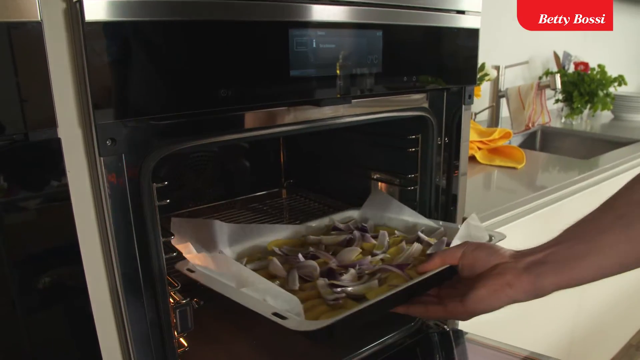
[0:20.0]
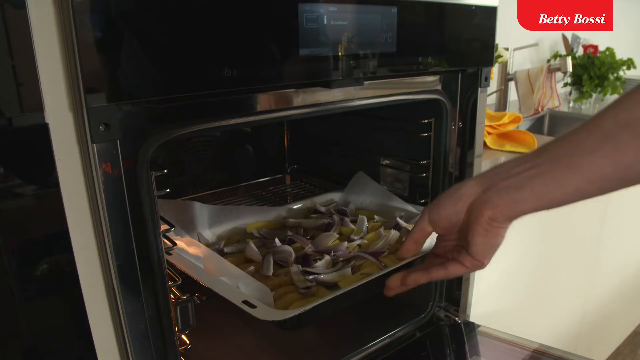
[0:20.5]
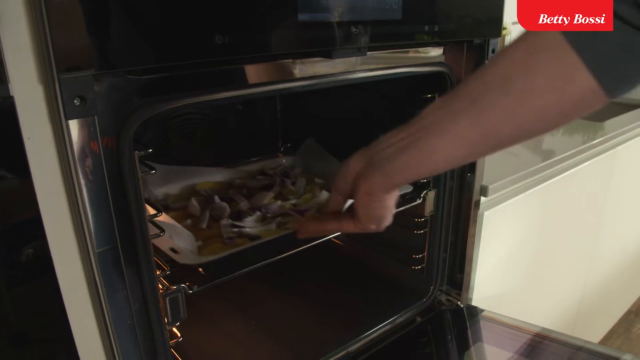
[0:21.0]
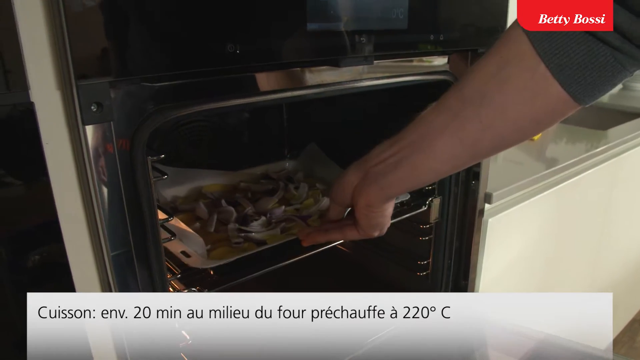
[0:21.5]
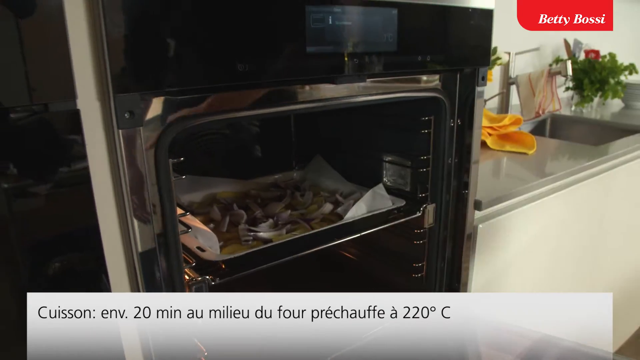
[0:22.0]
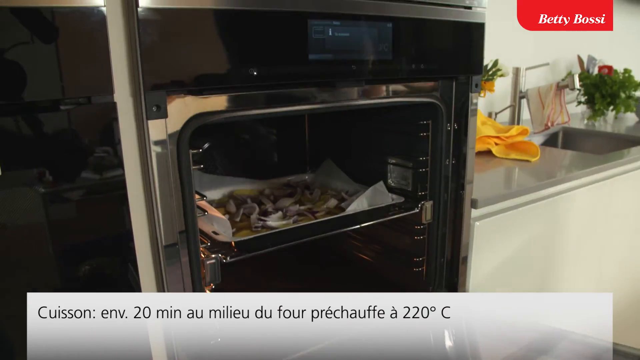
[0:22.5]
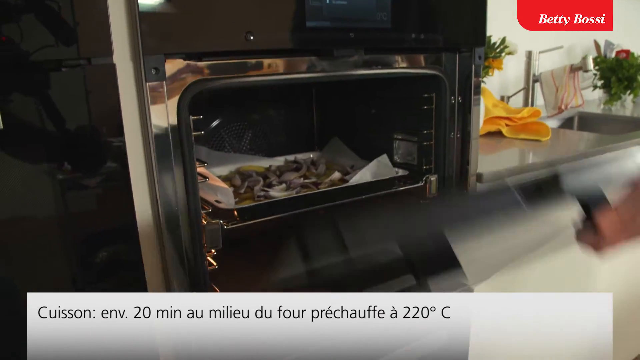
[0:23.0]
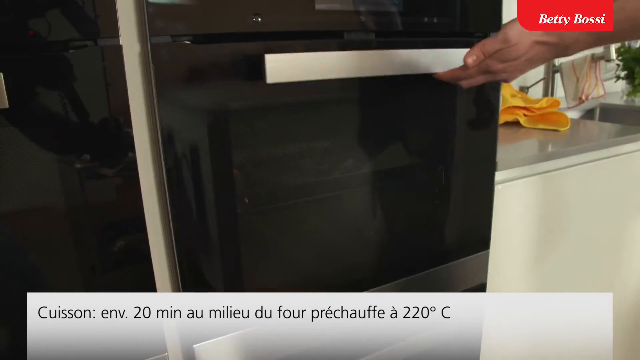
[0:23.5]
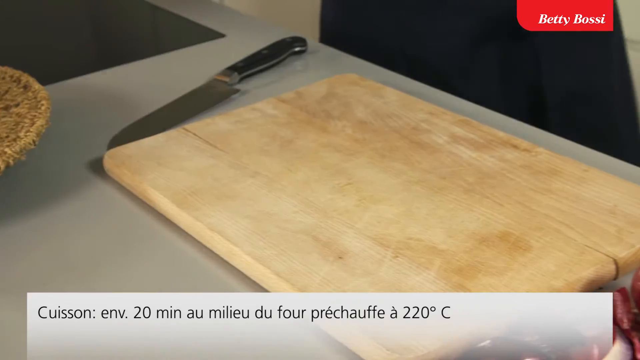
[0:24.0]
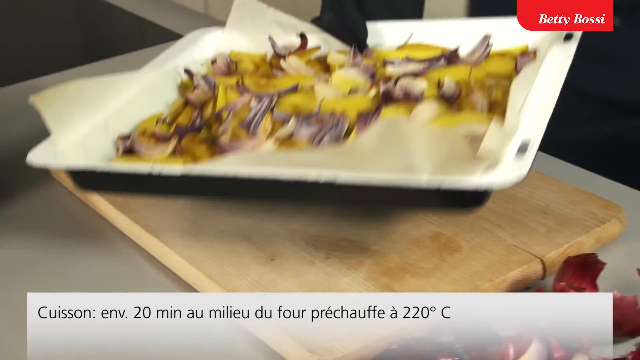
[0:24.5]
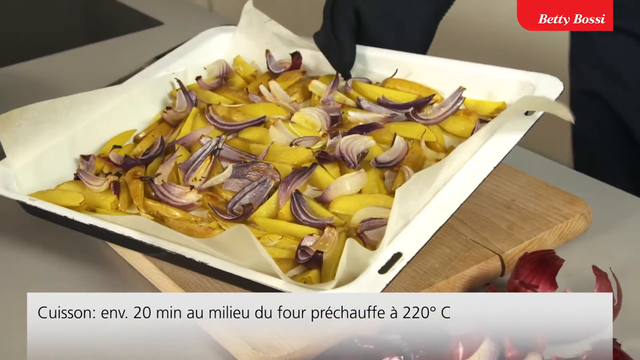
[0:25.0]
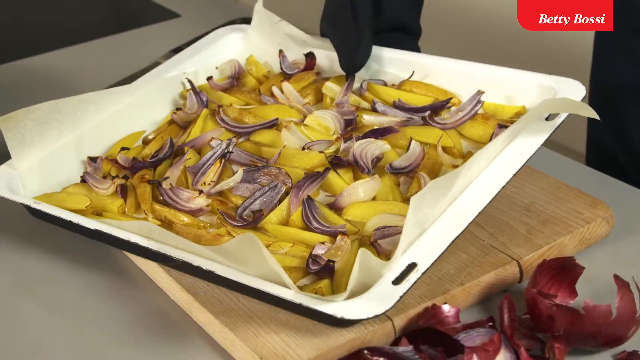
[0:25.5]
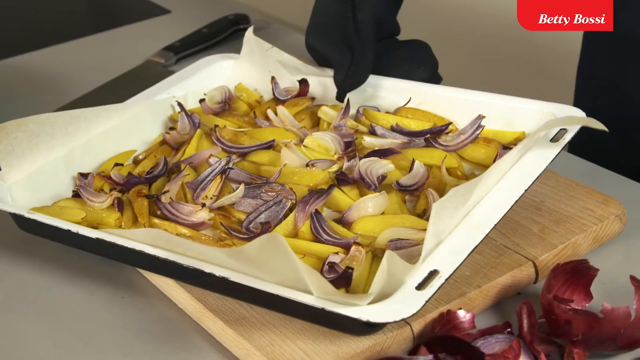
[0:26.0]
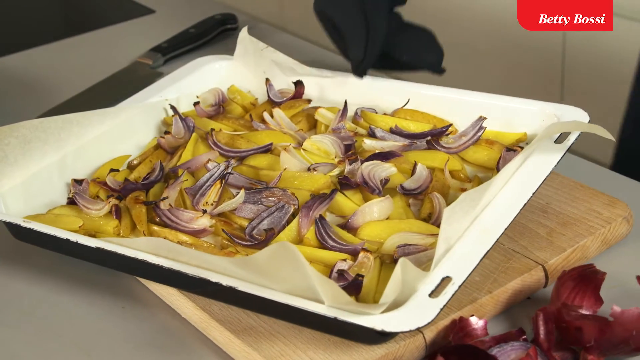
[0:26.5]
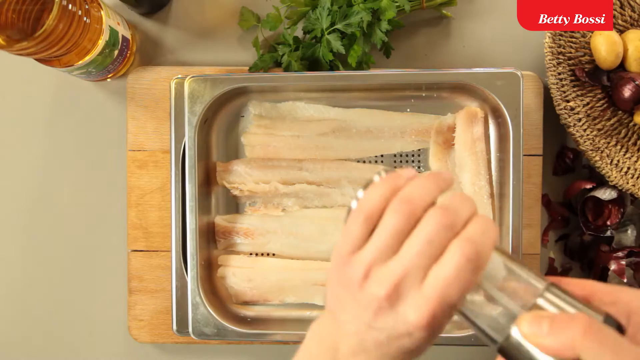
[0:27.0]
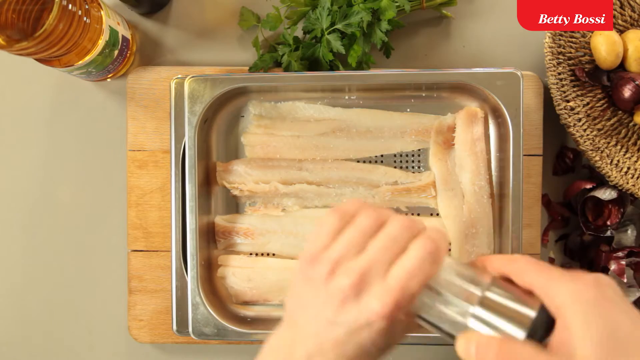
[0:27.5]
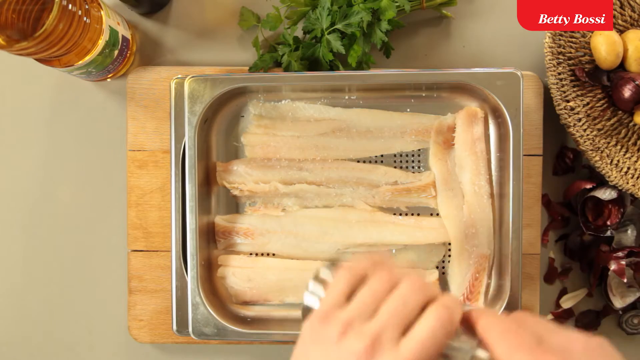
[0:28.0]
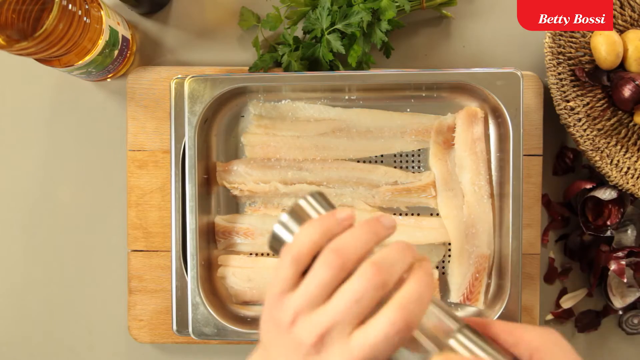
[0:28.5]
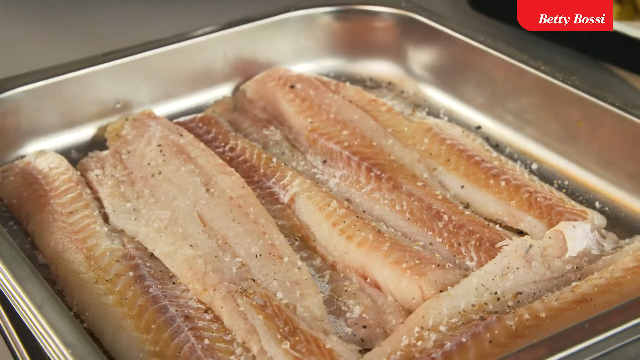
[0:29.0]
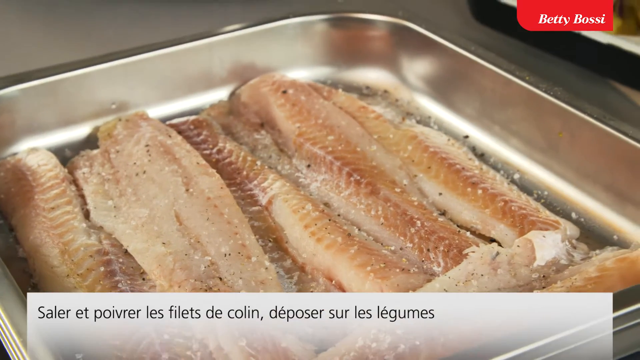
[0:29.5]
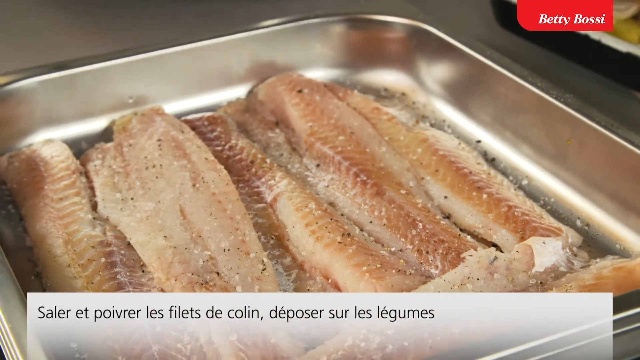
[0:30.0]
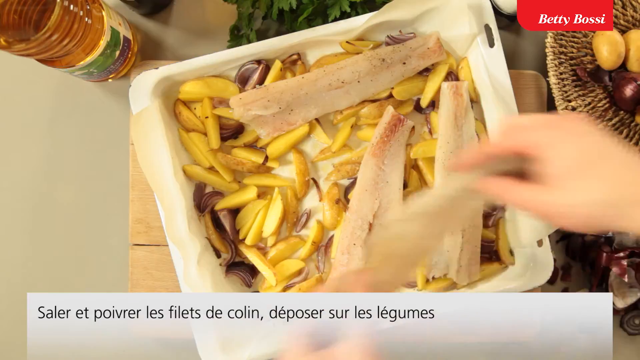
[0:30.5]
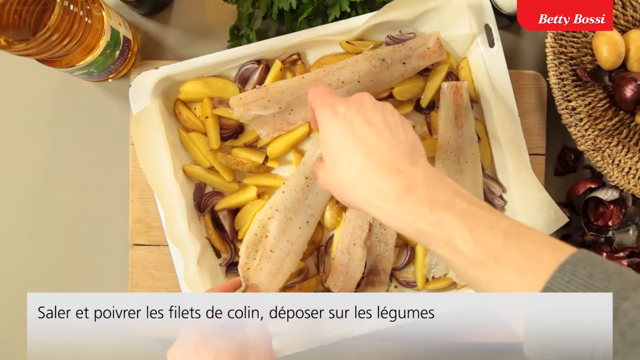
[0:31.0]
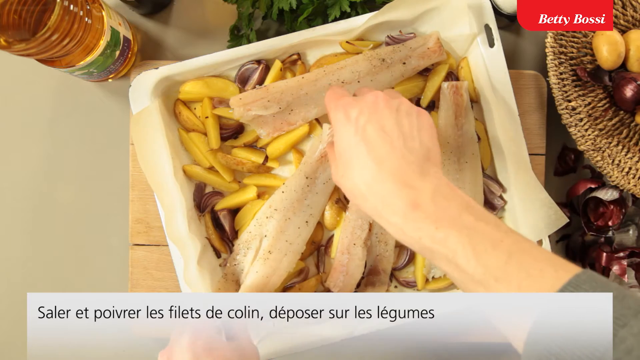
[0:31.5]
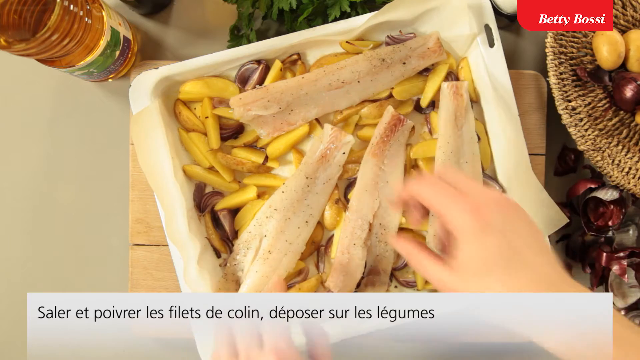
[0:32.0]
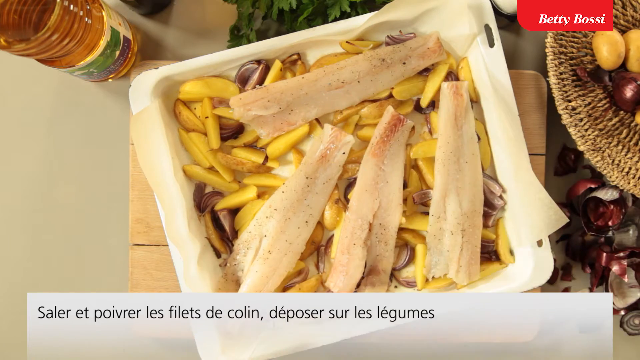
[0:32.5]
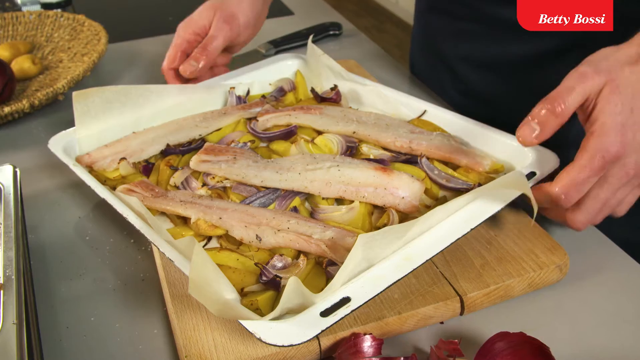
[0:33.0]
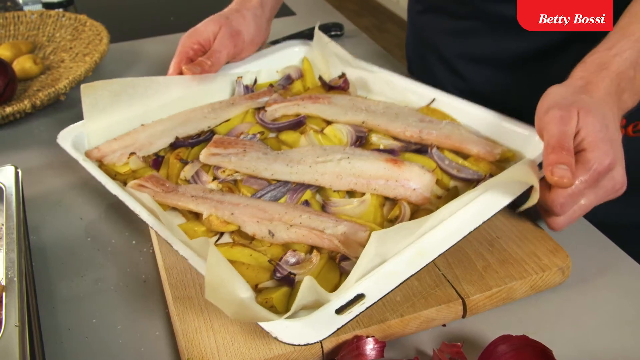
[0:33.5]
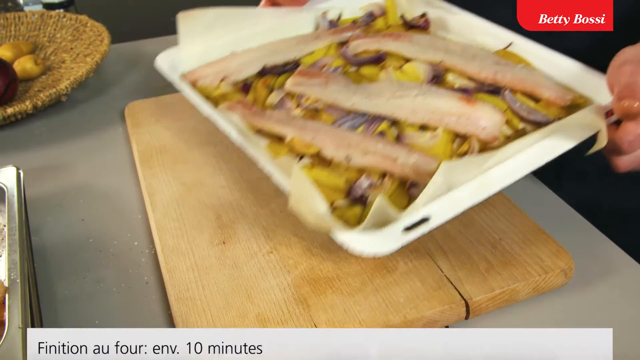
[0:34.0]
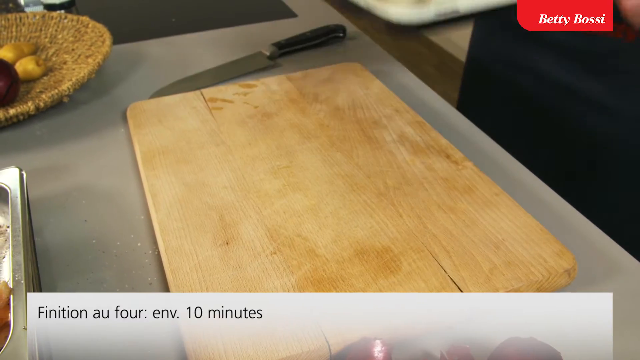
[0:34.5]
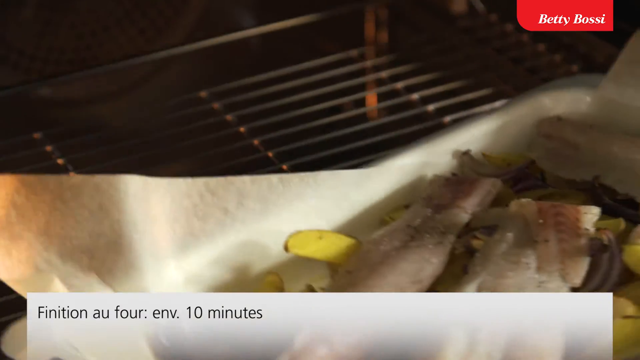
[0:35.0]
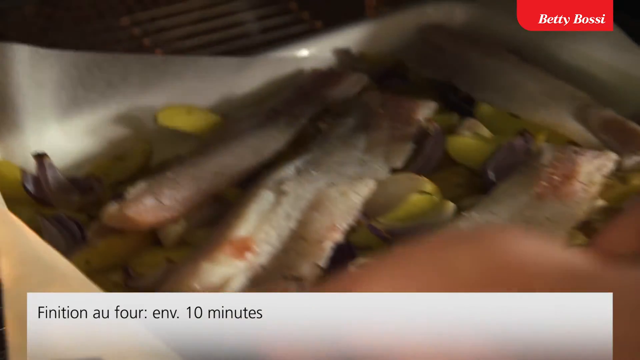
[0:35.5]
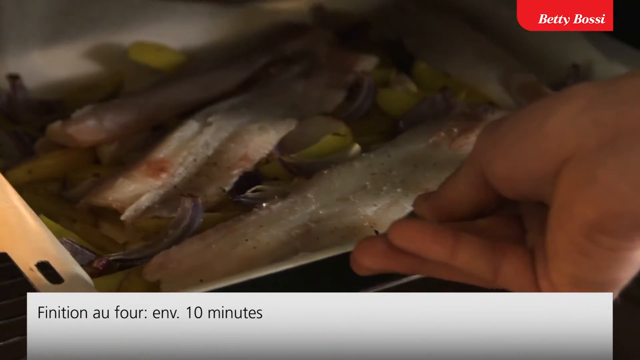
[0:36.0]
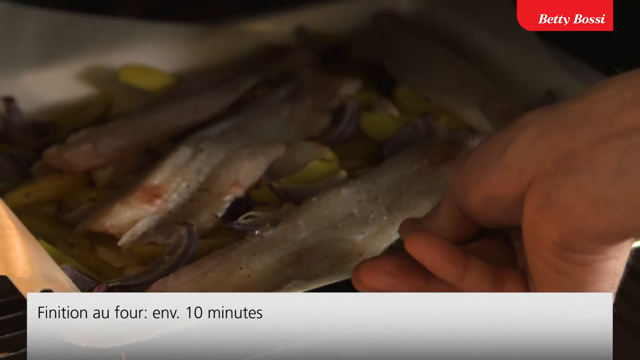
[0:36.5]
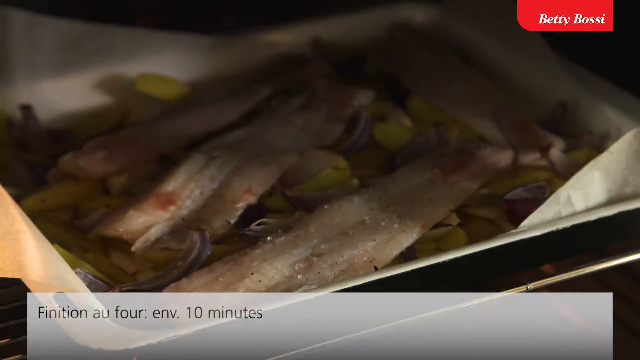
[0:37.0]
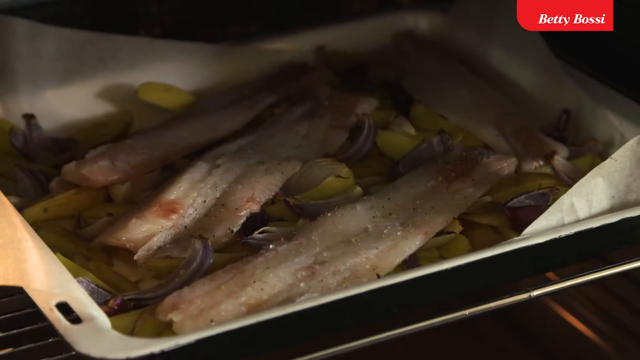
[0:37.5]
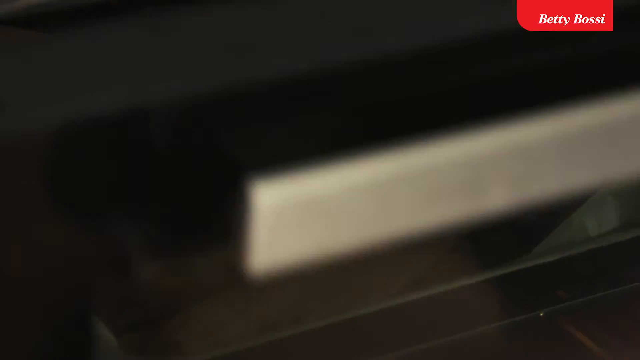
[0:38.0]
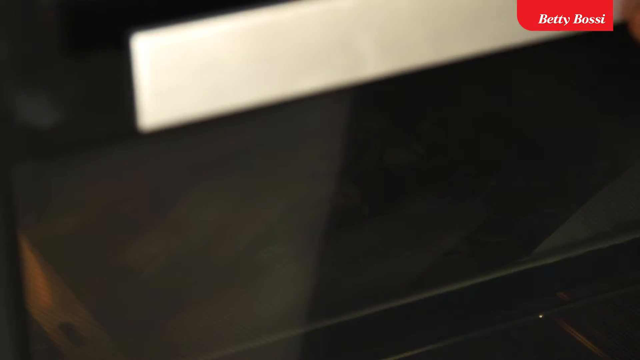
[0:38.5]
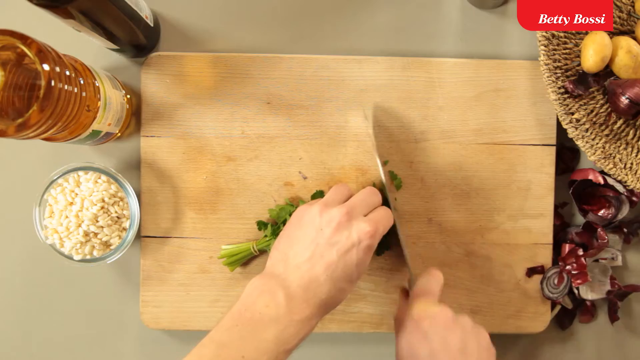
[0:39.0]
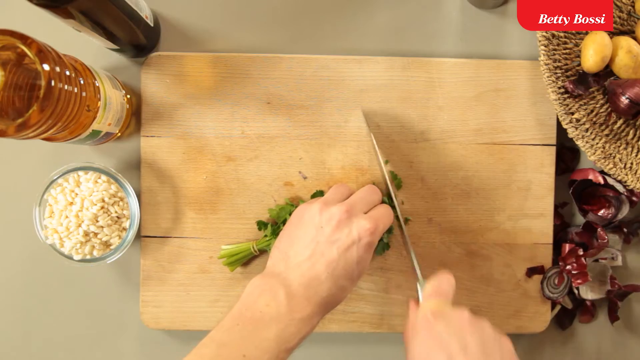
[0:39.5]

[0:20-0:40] A person's hand pushes a baking tray into an open oven, with a countertop and sink to the right side. The oven door is shut. Later, the food cooked in the oven is placed on a wooden board on the countertop. The potatoes are golden and the onions look white and crisp; they are slices of red onion. The person wears black oven mitts. Next, the person prepares what looks like fish fillets, sprinkling salt over them, then layers the fillets over the potatoes and onions that were pre-cooked in the oven. Four fish fillets are visible. The person's hands lift up the food in the tray and place it on the oven rack to cook. Next, the person's hands chop some green leafy vegetables on a wooden cutting block.